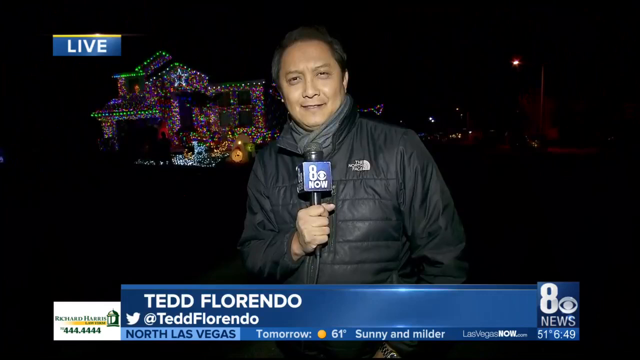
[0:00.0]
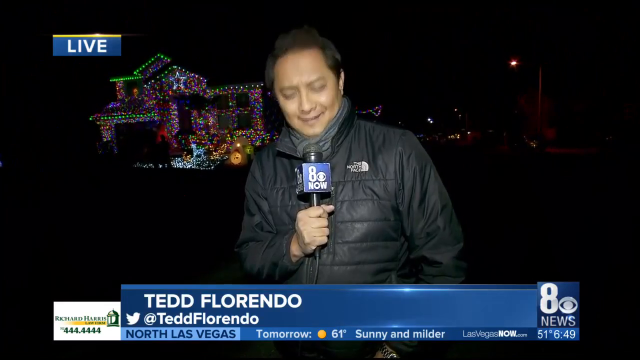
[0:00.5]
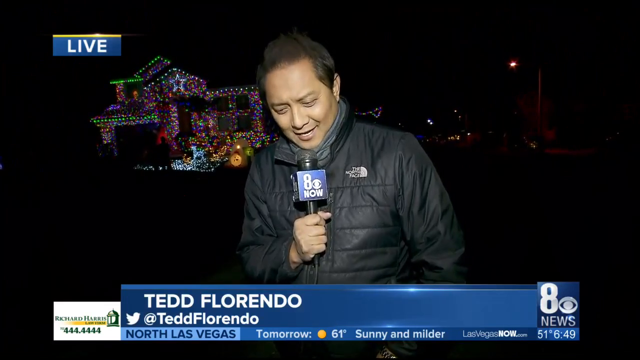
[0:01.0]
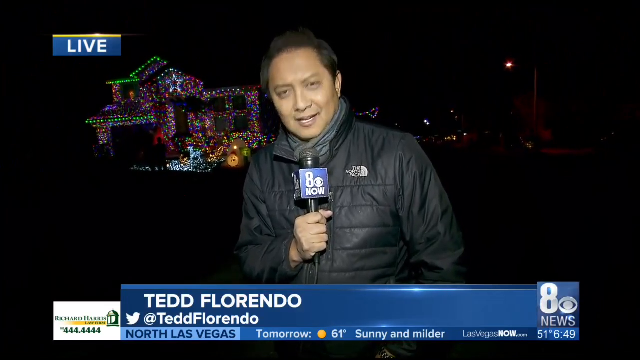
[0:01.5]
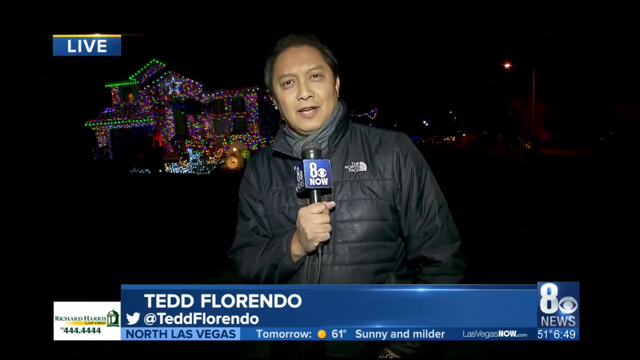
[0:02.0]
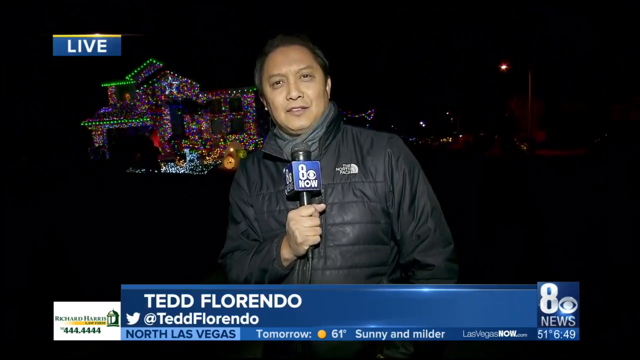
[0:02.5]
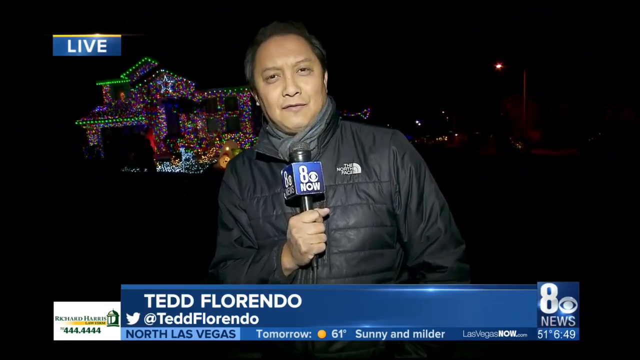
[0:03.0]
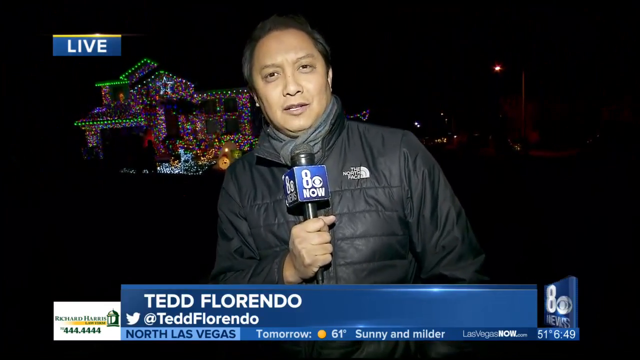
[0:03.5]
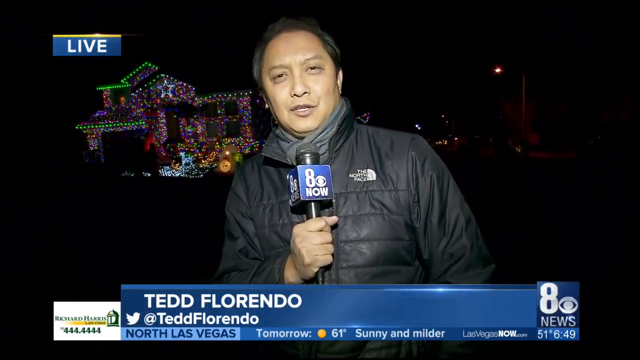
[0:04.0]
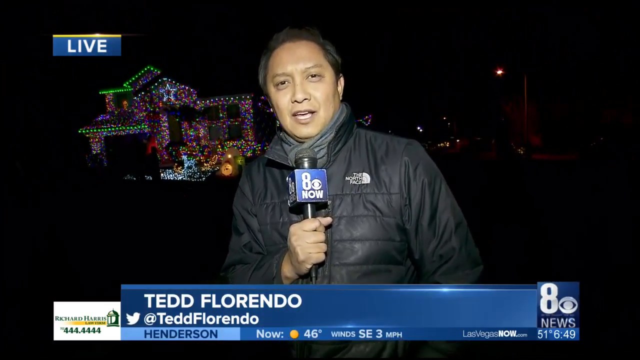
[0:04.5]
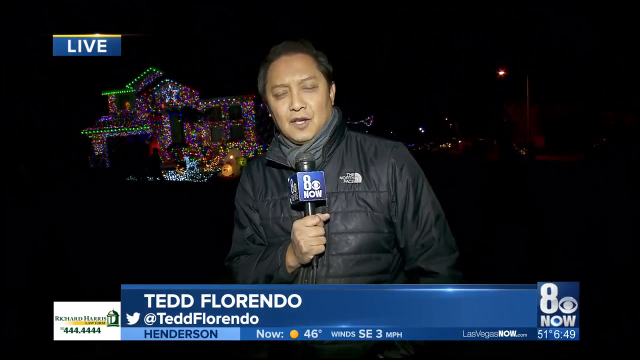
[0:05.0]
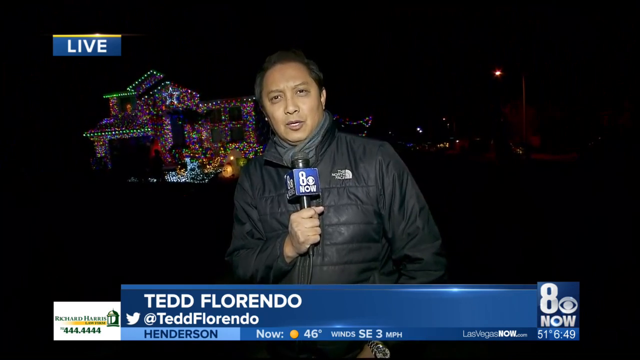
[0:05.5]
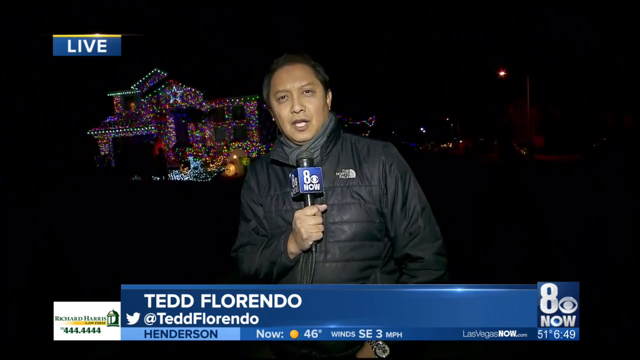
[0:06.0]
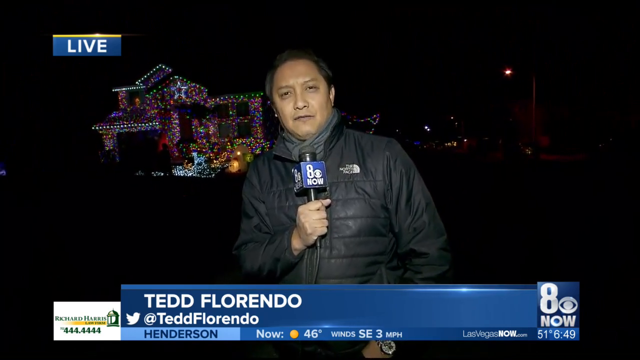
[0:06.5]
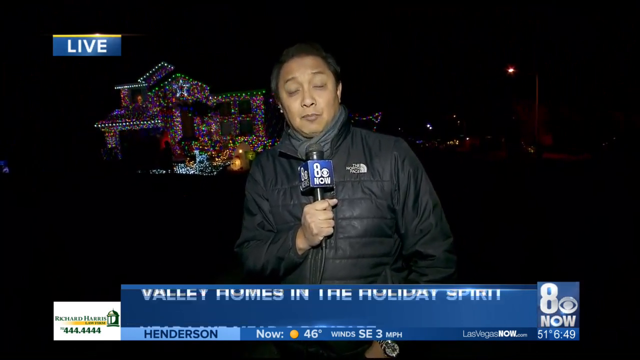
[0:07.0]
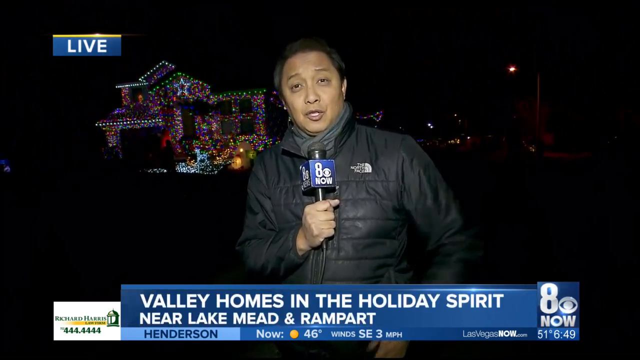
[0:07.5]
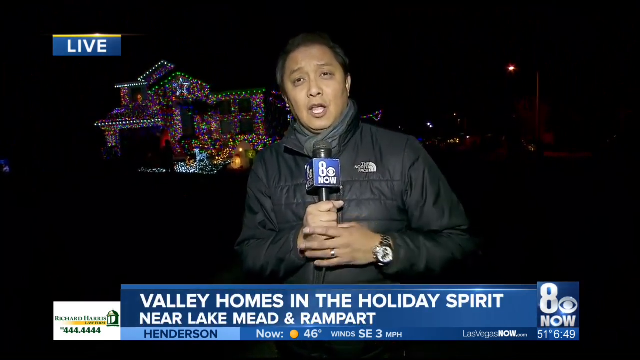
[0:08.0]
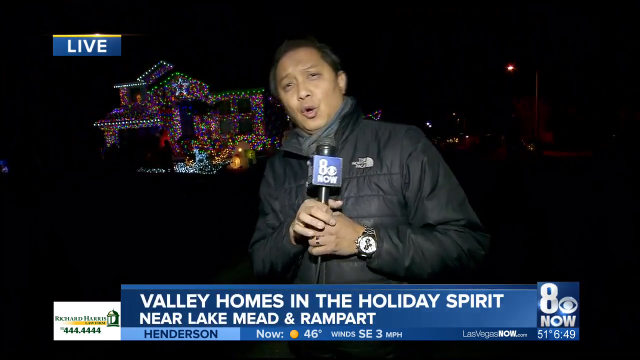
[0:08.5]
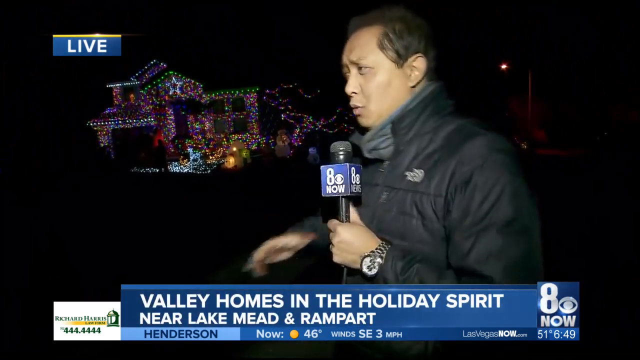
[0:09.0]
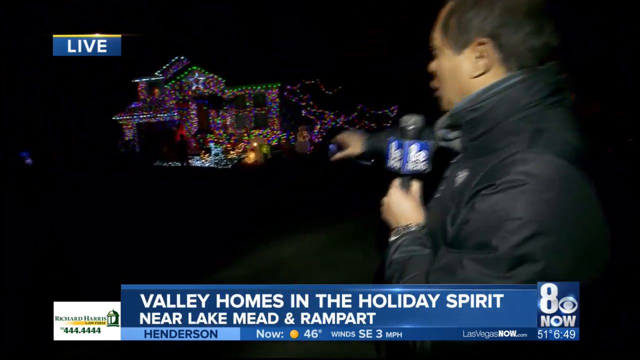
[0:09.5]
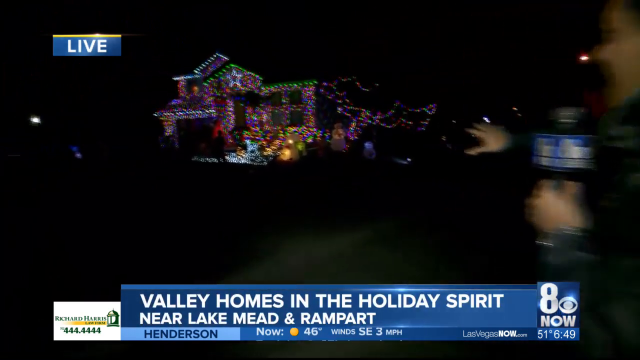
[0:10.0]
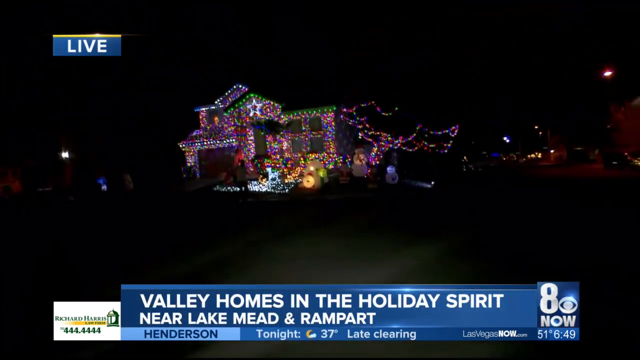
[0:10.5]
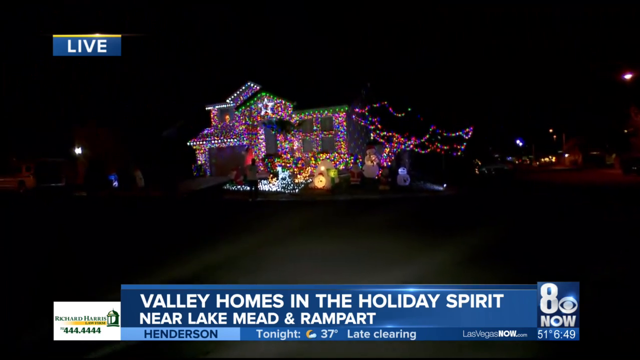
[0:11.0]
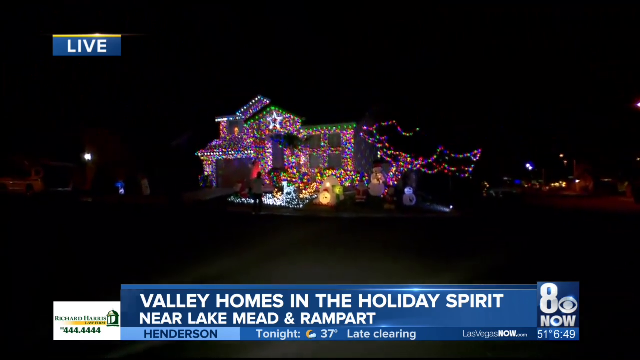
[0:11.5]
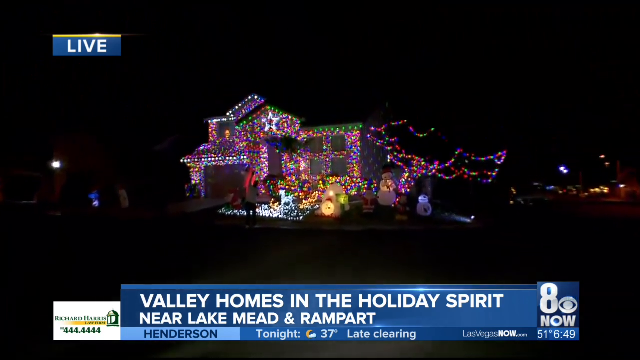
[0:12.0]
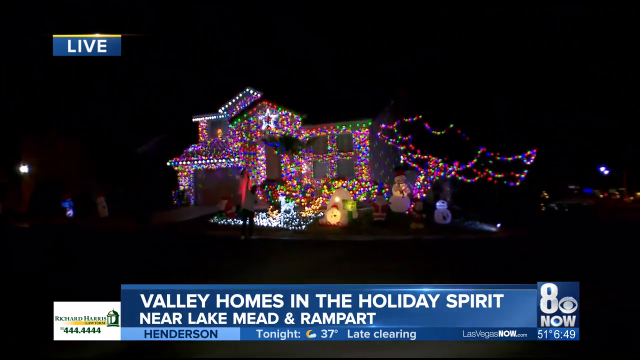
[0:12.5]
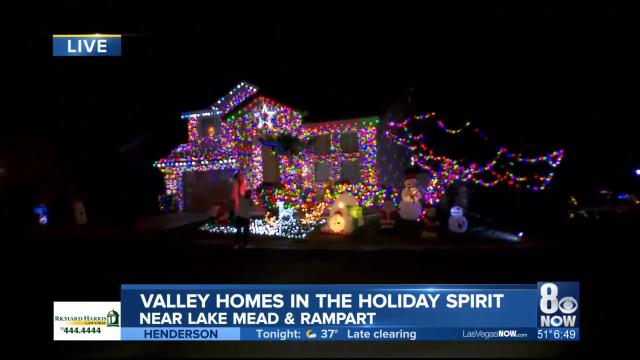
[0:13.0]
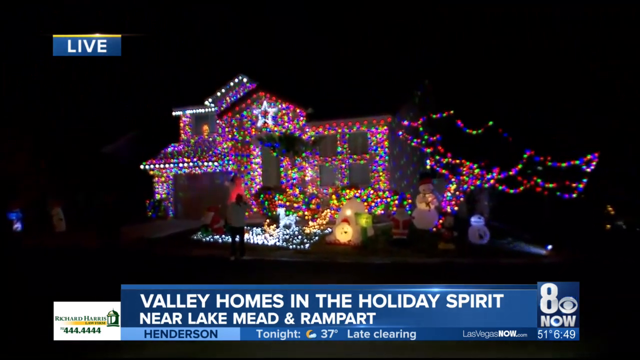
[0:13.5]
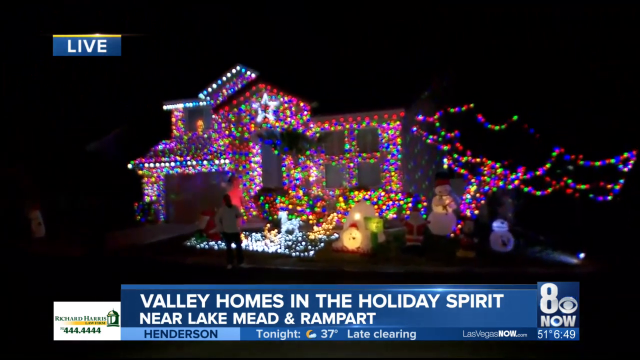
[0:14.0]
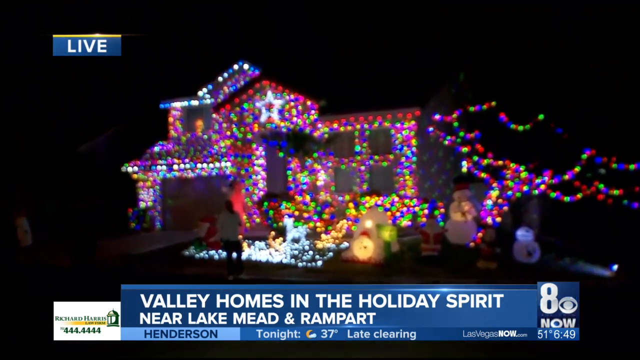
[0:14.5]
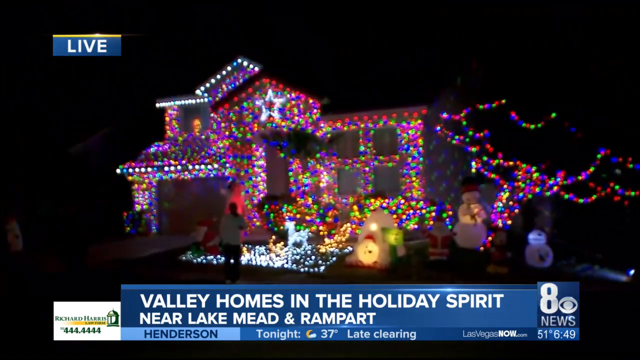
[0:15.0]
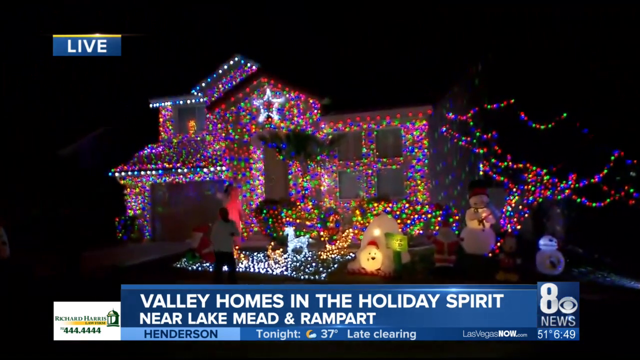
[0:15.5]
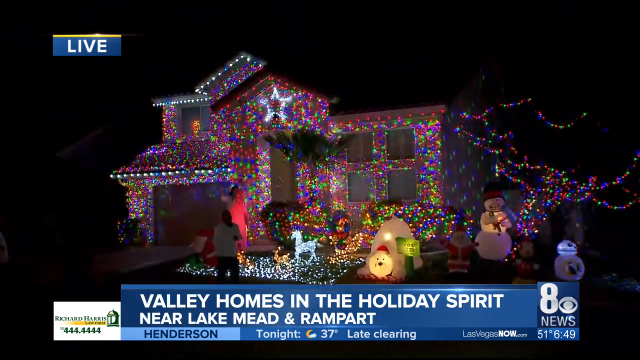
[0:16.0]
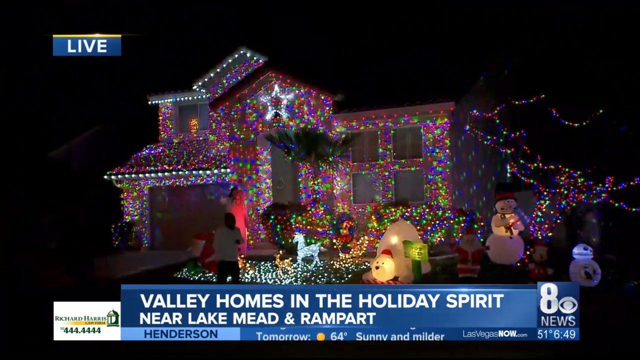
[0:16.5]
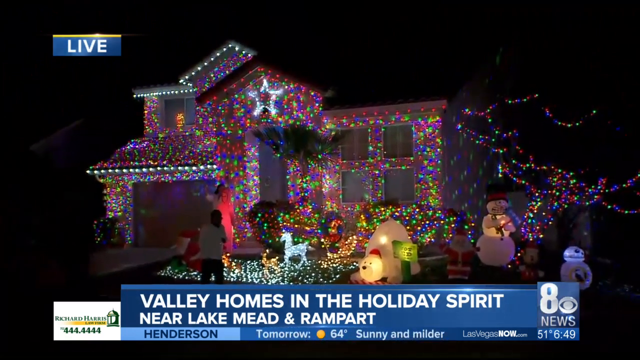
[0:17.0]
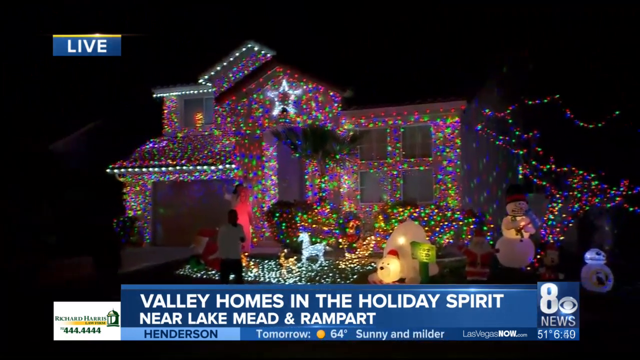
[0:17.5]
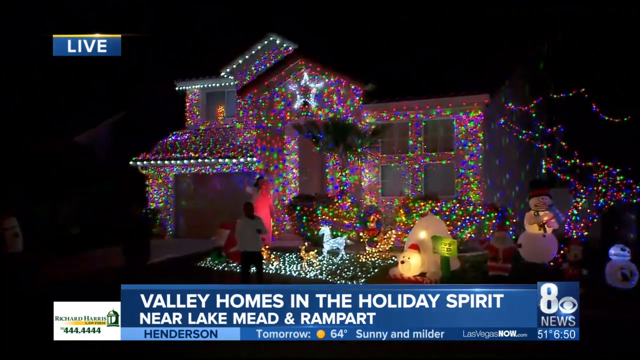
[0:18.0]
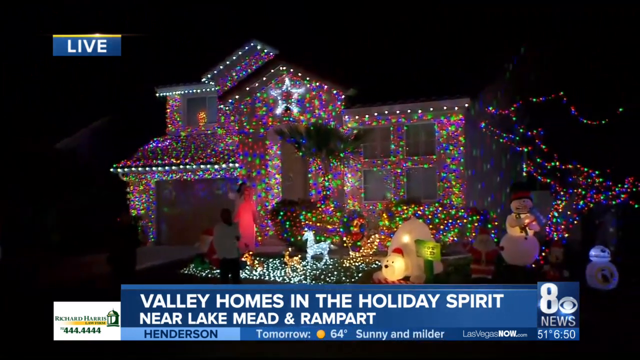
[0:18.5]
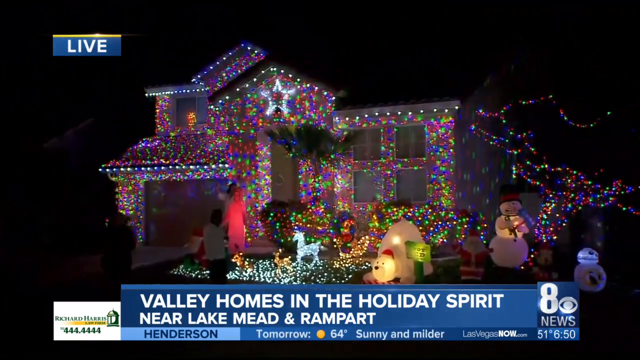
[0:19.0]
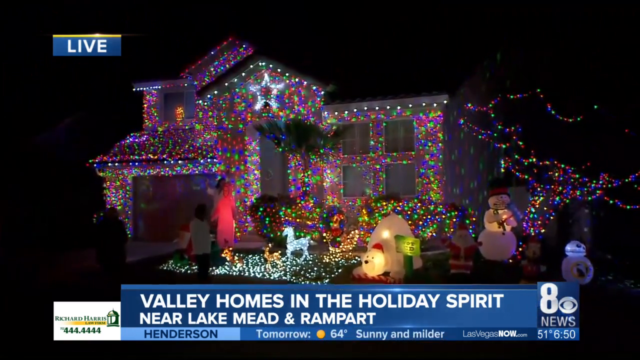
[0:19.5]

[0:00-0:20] A news presenter talks straight to camera on location rather than in a studio, outside a house covered in Christmas lights. In the top left corner of the screen is a blue rectangular box with a gold line across its top, and on the blue section white capital letters read "LIVE". A blue graphic strap runs across the bottom of the screen; at its right end is a logo that says "Eight Now" with the shape of an I next to it. The writing on the strap gives the presenter's name, Ted Florendo, along with his Twitter address, "@Ted Florendo". At the very bottom of the ticker is the weather report. The presenter holds a microphone that also says "8 Now" and talks into it while looking straight at camera. The caption then animates to read "Valley Homes in the Holiday Spirit near Lake Mead and Rampart". He keeps talking, then turns around to his right and points towards the house in the background. The house has elaborate Christmas lights, with a star in the middle of the front pitch of the house. The front lawn is covered with Christmas lights and characters, and it looks as if every part of the house has a light on. The lights are multi-coloured, in all sorts of colours, twinkling and flickering. A couple of people can just be made out standing outside the house looking at the lights.